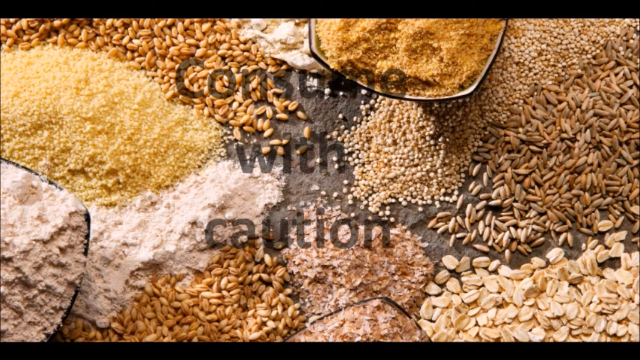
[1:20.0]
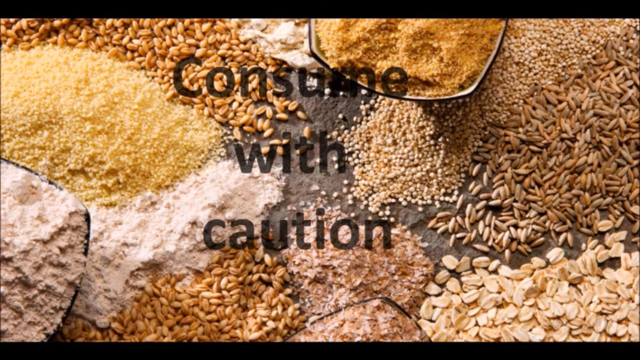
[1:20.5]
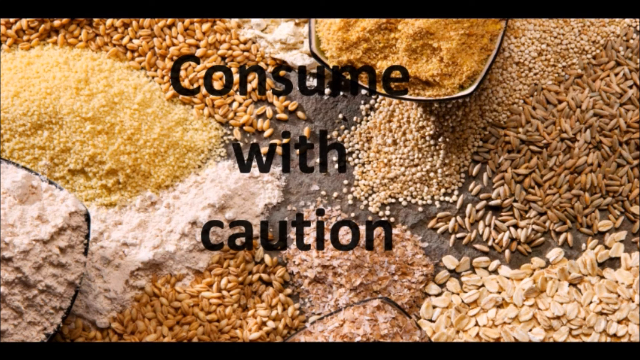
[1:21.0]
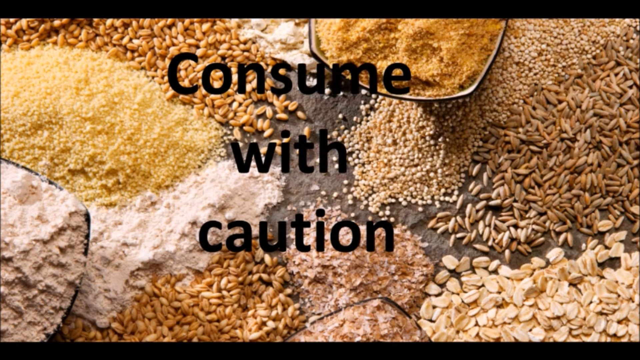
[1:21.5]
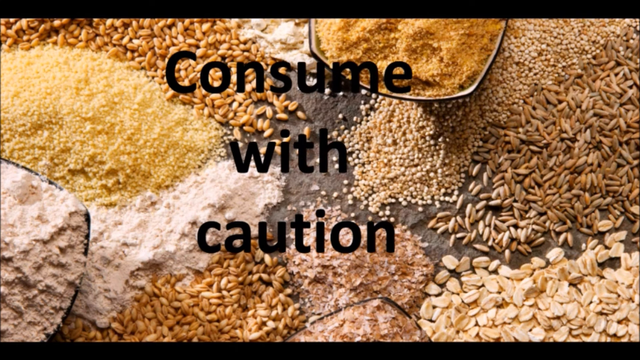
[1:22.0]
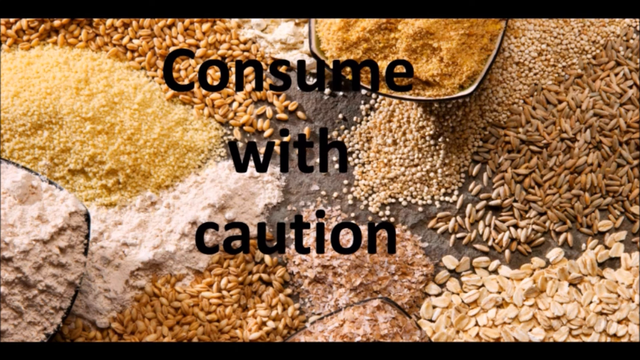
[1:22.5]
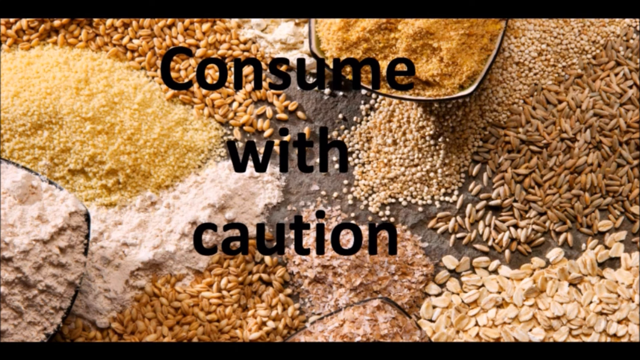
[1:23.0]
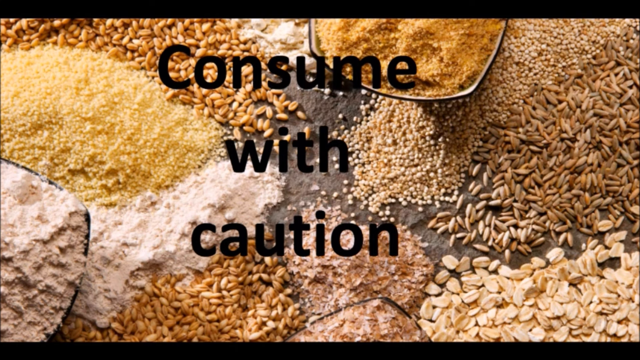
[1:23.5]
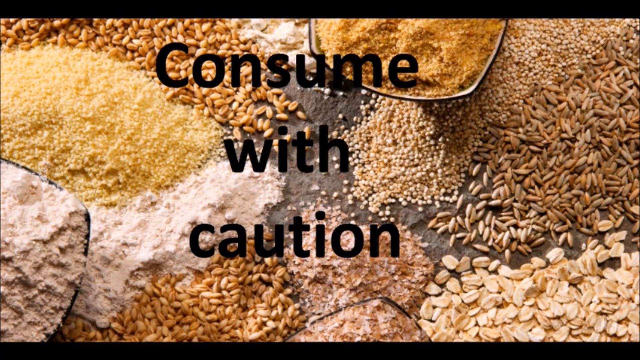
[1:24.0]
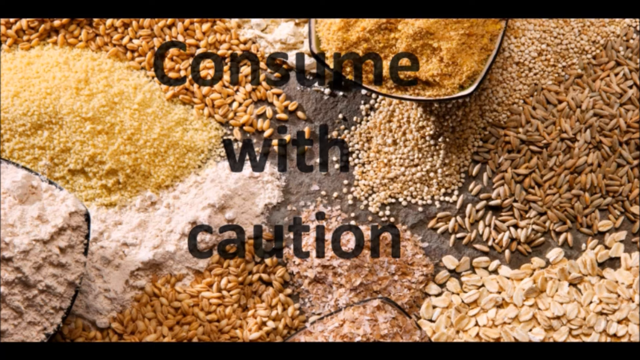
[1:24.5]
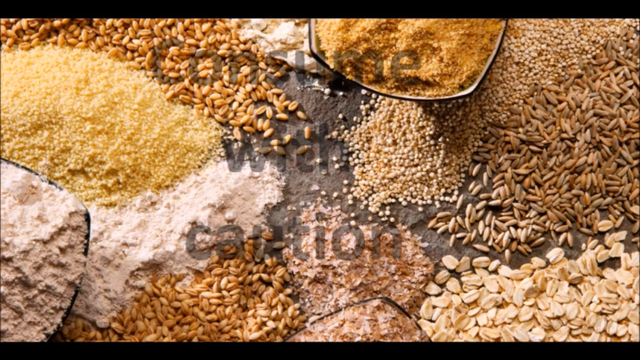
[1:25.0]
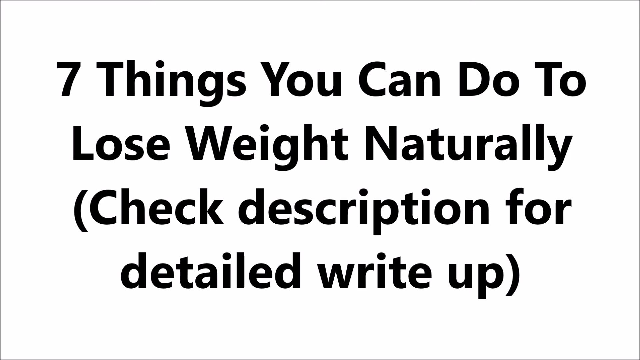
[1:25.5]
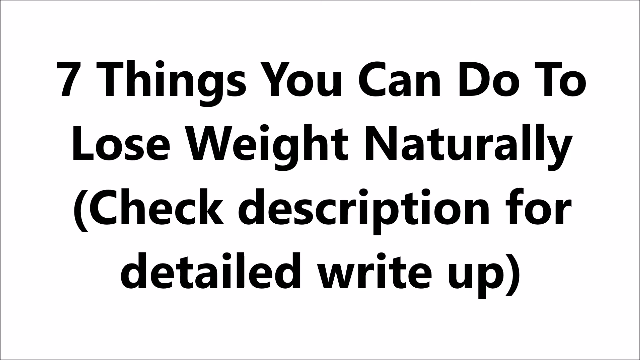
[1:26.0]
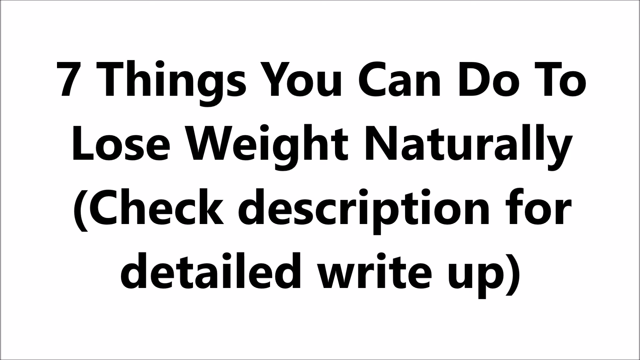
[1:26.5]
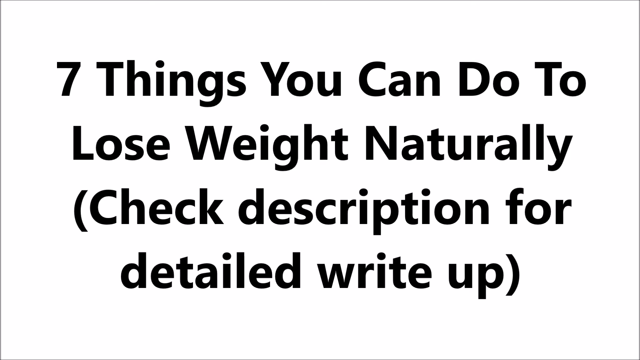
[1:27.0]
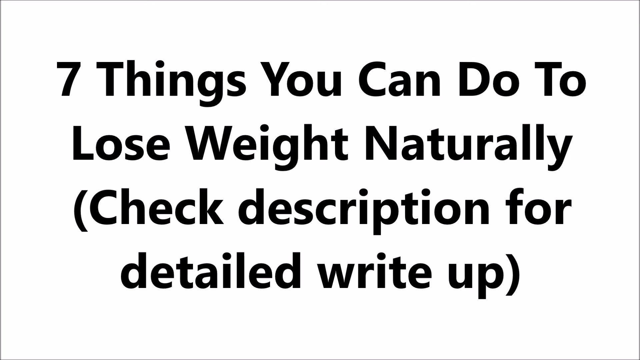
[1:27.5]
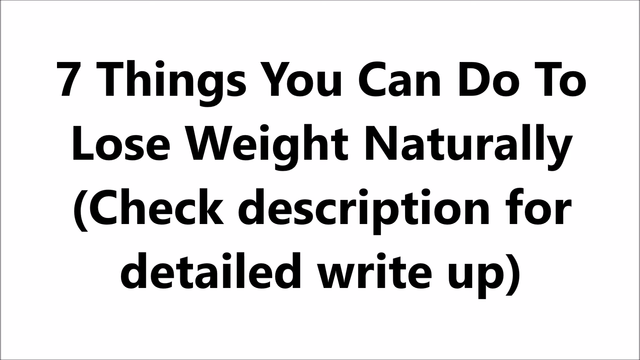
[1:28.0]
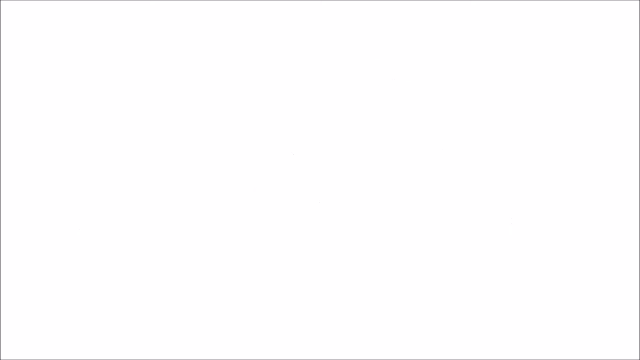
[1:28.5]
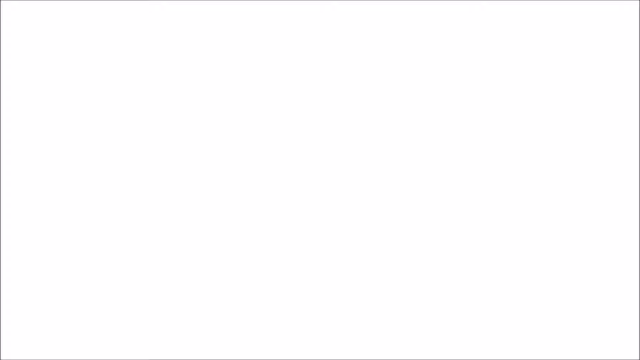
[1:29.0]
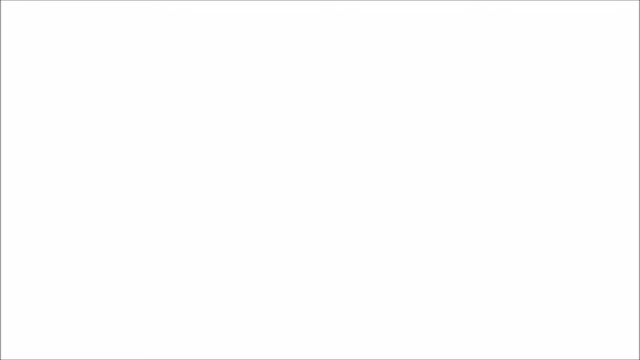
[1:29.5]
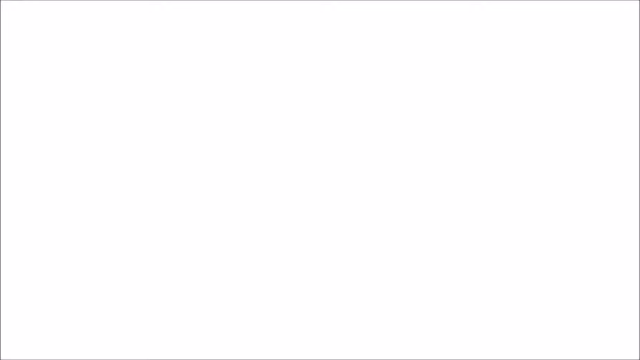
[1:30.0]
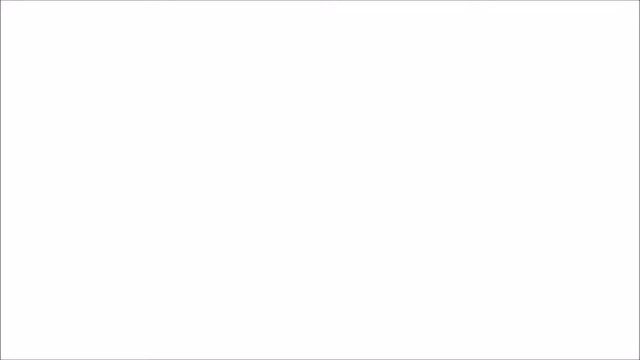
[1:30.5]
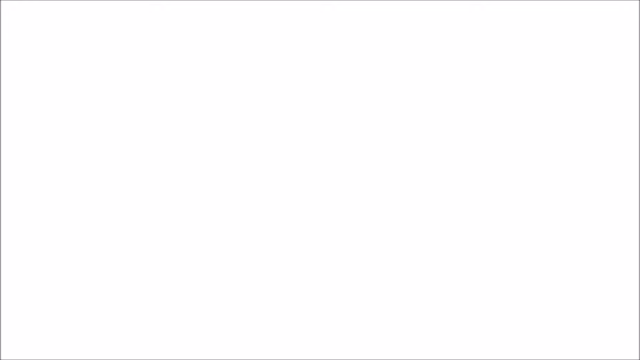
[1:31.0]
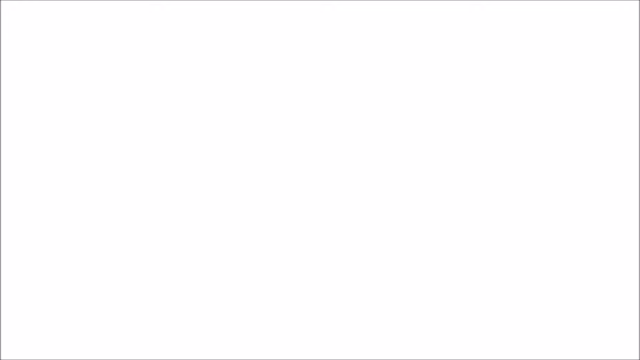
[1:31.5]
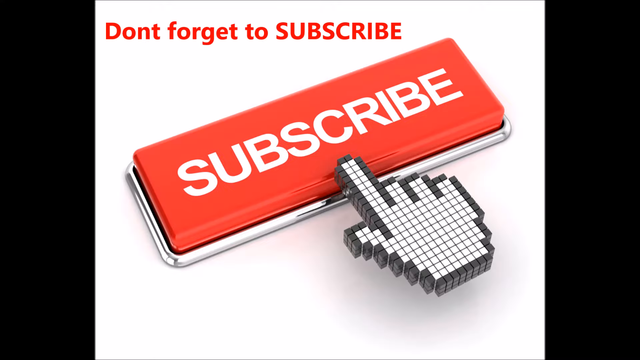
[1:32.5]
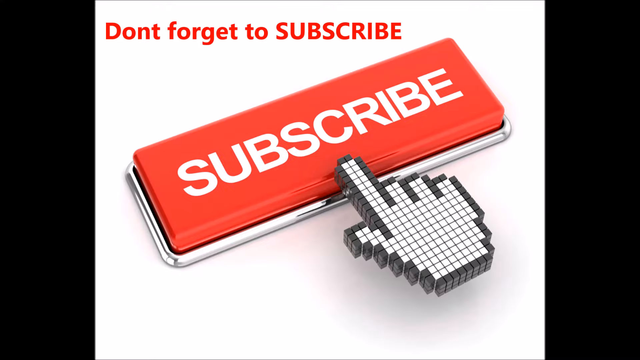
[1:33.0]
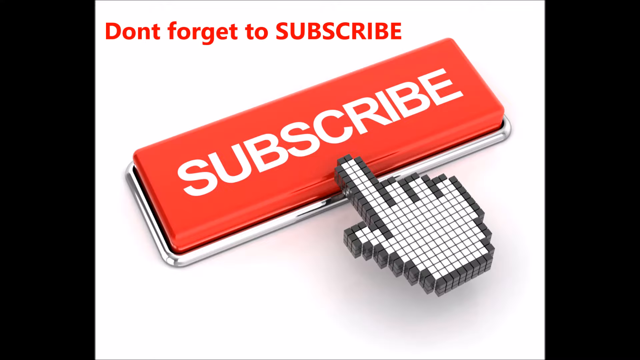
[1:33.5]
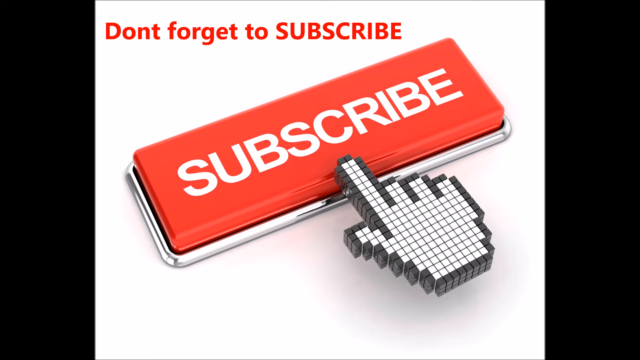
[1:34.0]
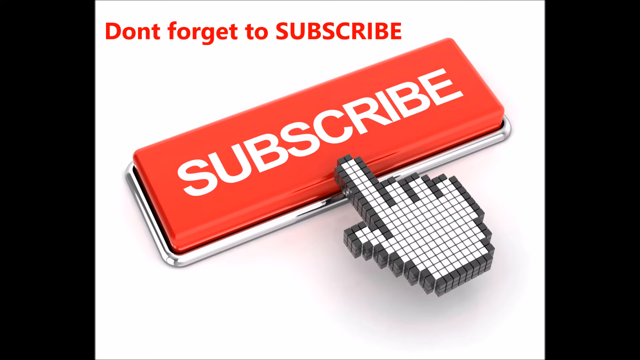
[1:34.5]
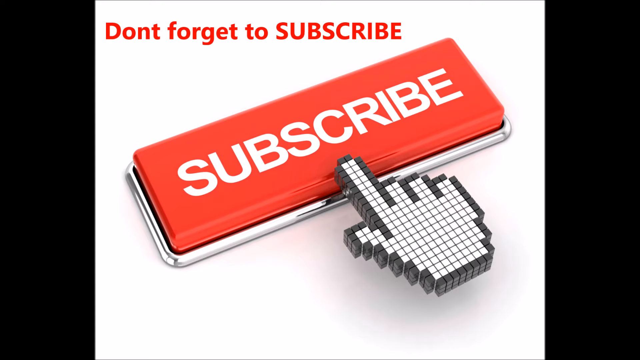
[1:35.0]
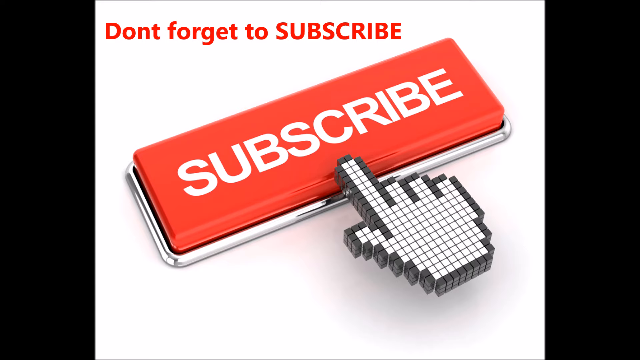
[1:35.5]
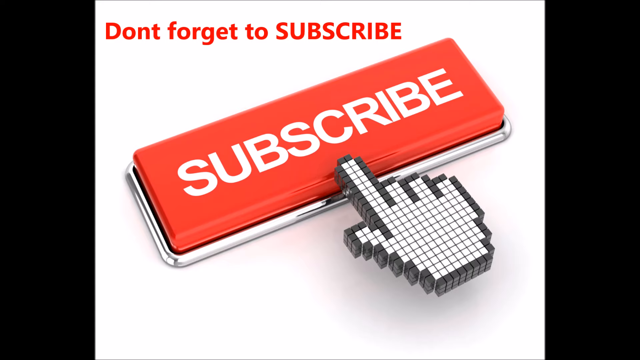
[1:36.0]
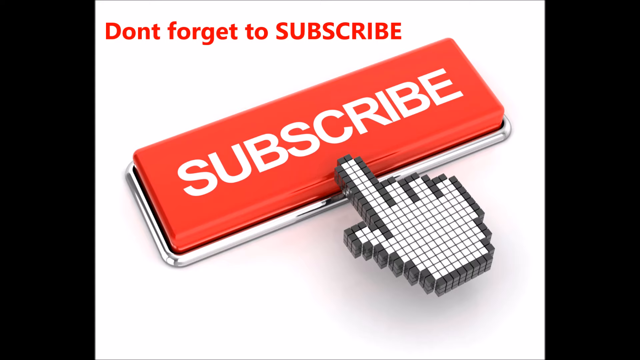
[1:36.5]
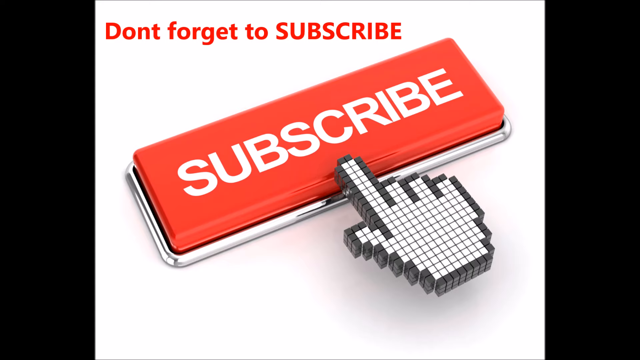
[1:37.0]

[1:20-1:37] A pile of grains and seeds appears to include flour, oats and seemingly four or five other varieties. Black text pops up reading "consume with caution." Then a white background shows black text reading "7 things you can do to lose weight naturally (check description for detailed write-up)," with the seven written as a number. The screen goes white and blank, and a red subscribe button pops up with a pixelated hand touching it; at the top the text says "don't forget to subscribe." Inside the button, white font reads "subscribe." The pixelated hand is outlined in black, mostly white inside, with the pointer finger up touching the button.